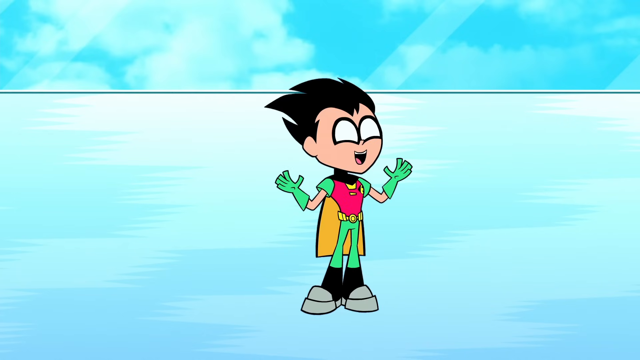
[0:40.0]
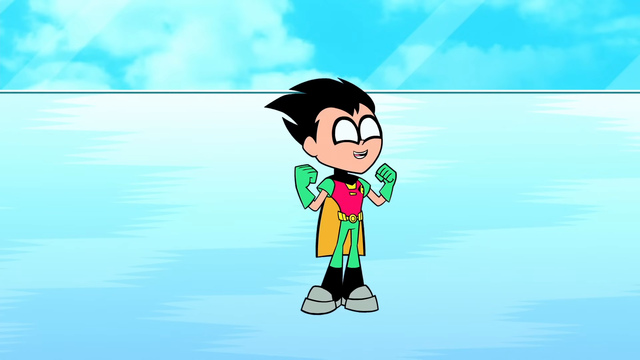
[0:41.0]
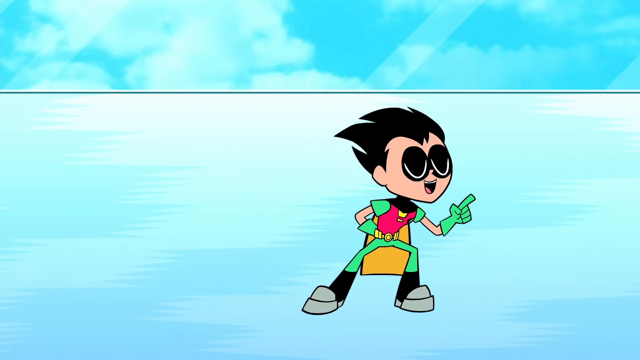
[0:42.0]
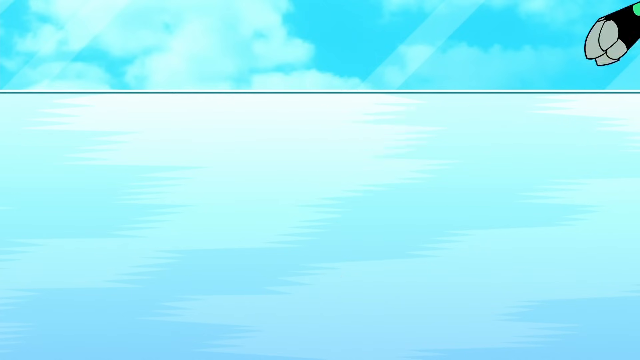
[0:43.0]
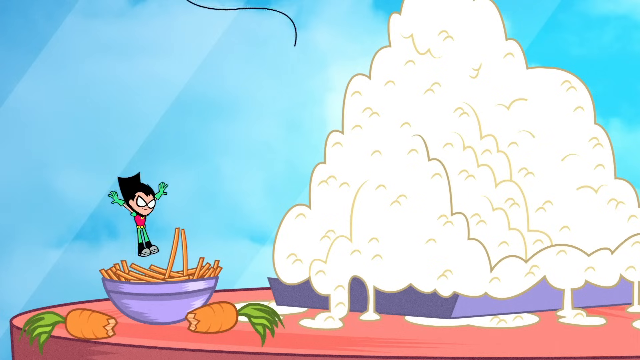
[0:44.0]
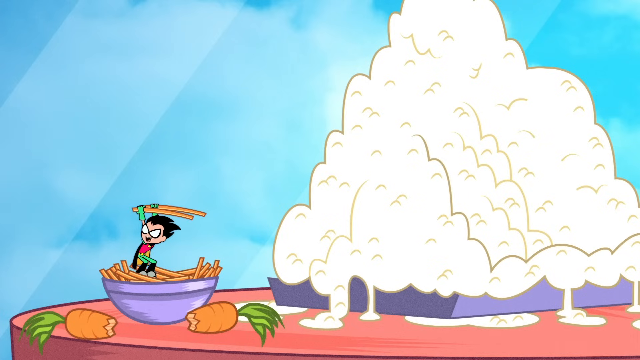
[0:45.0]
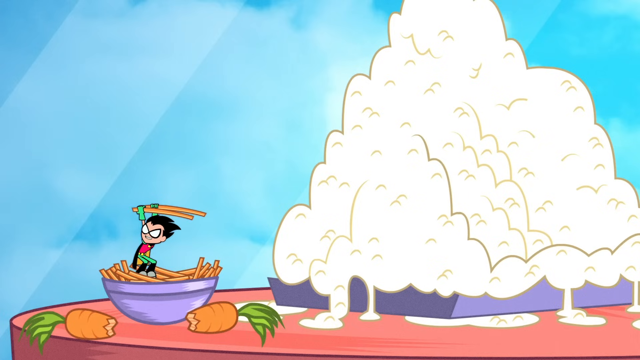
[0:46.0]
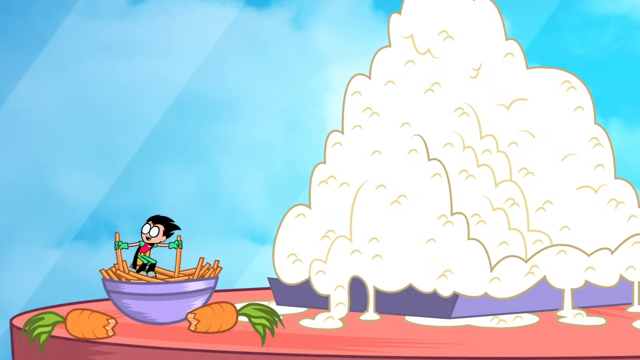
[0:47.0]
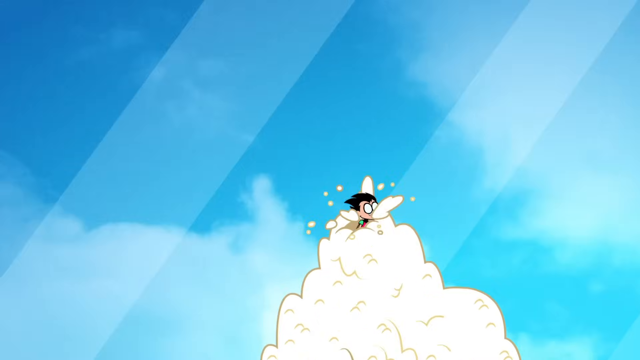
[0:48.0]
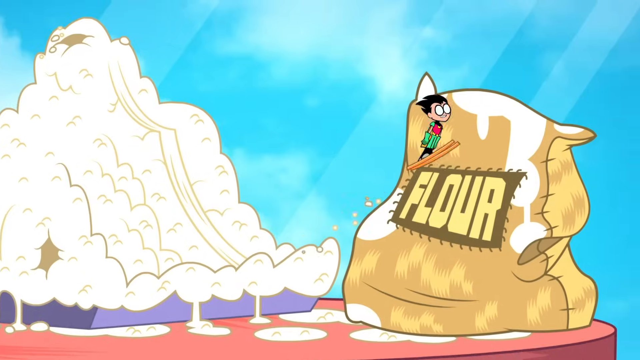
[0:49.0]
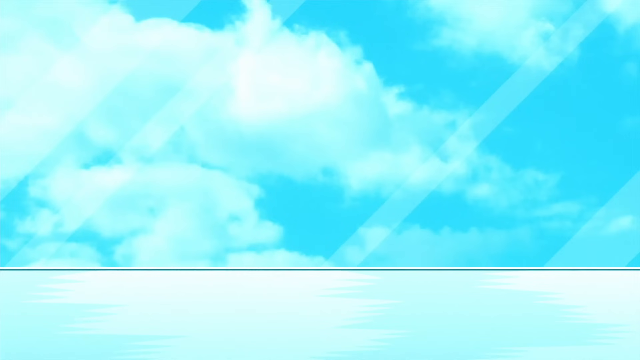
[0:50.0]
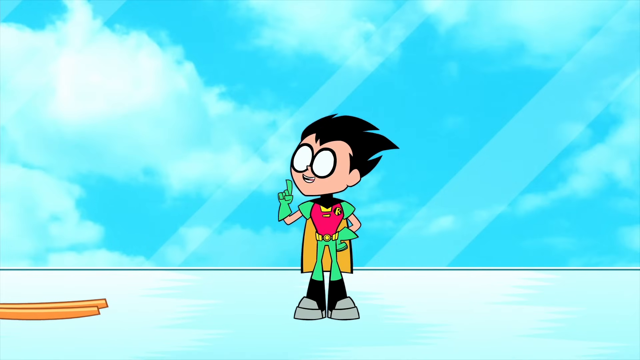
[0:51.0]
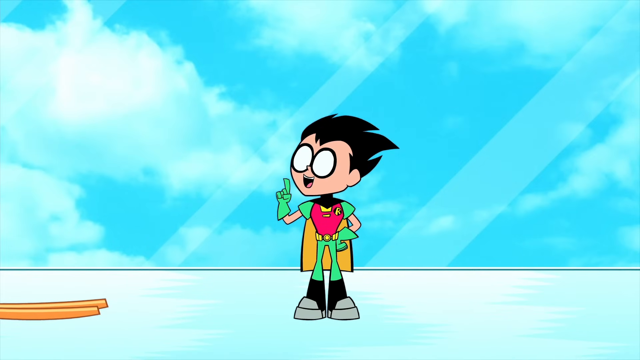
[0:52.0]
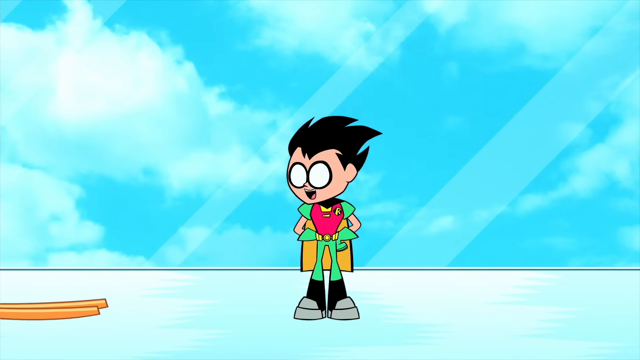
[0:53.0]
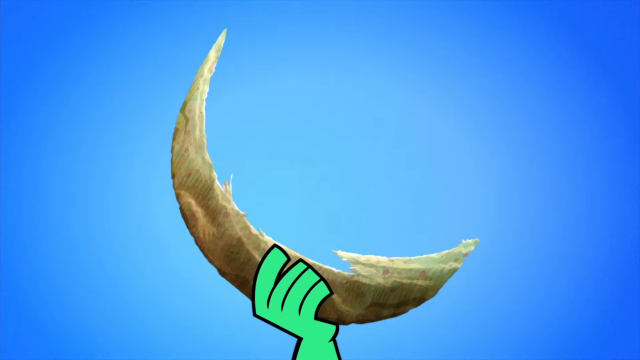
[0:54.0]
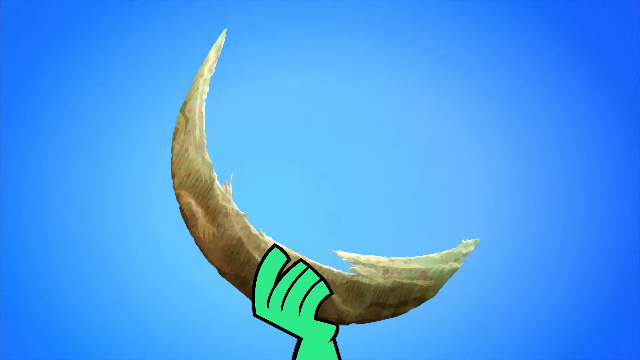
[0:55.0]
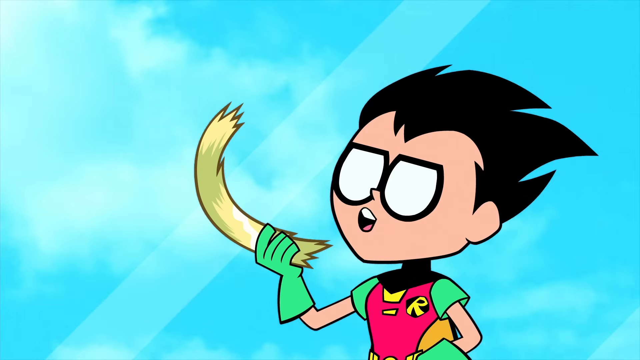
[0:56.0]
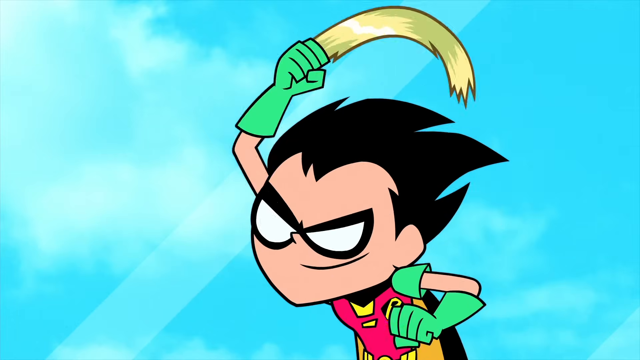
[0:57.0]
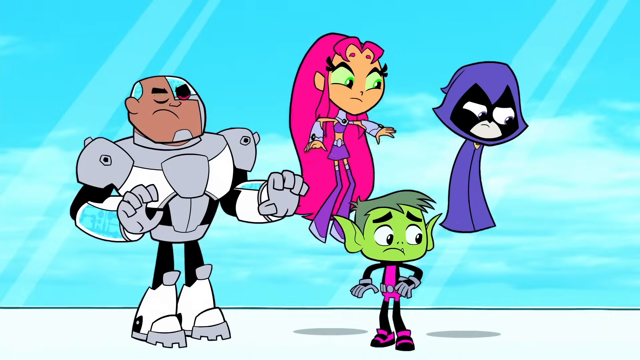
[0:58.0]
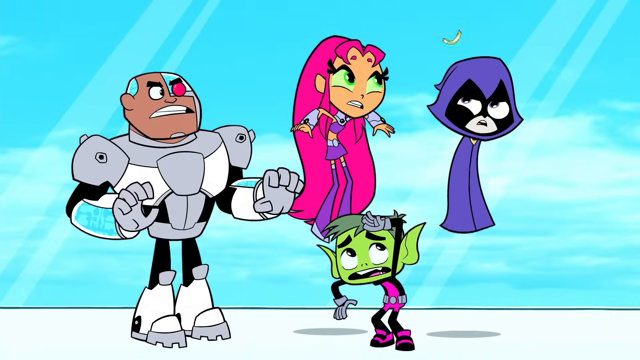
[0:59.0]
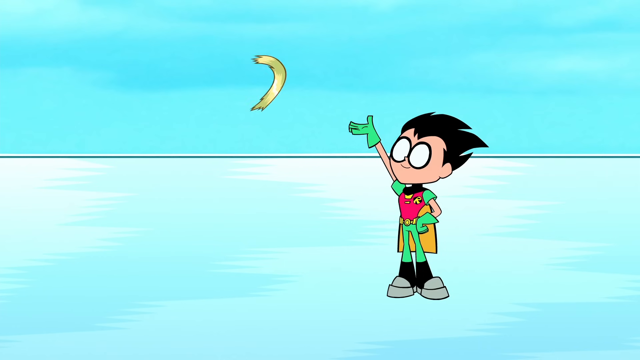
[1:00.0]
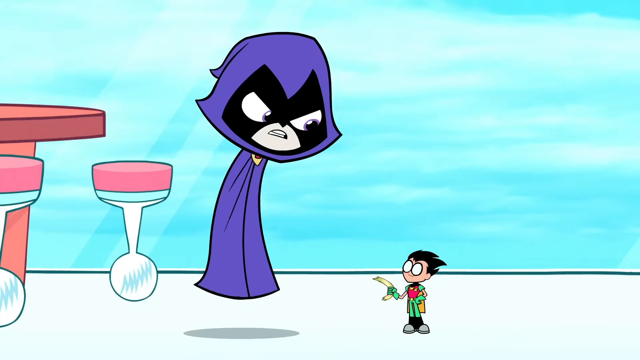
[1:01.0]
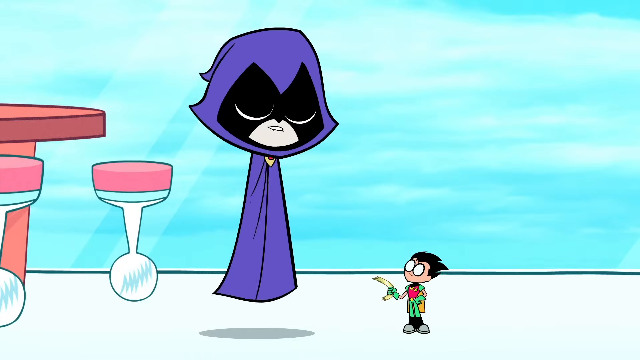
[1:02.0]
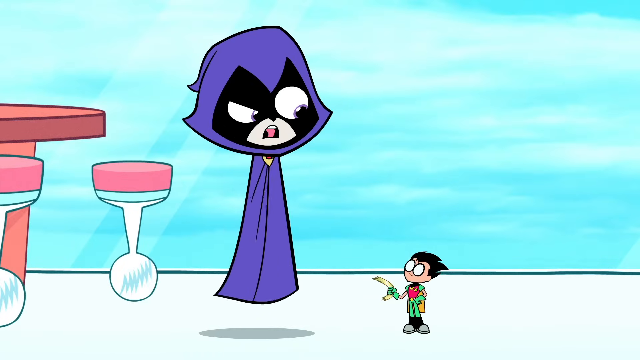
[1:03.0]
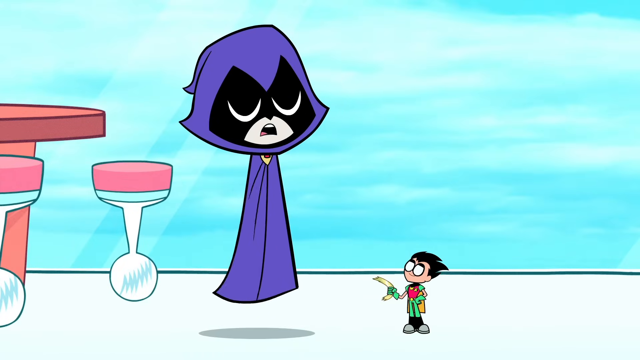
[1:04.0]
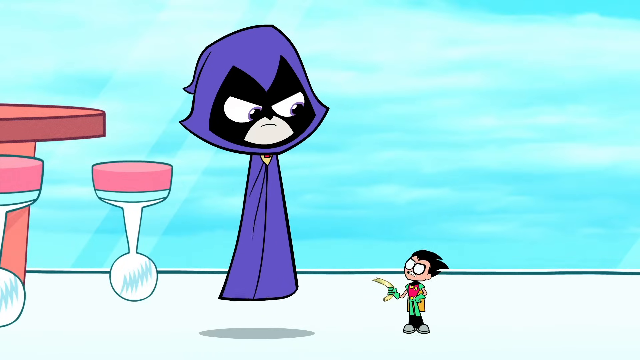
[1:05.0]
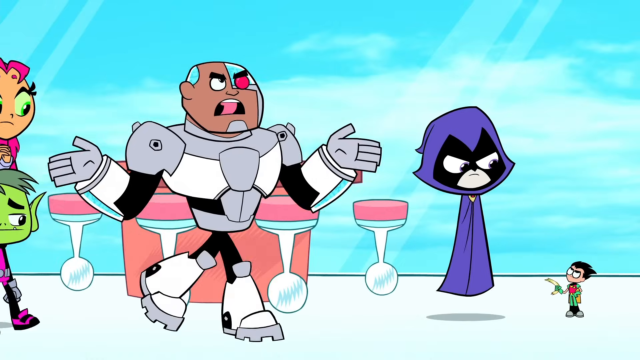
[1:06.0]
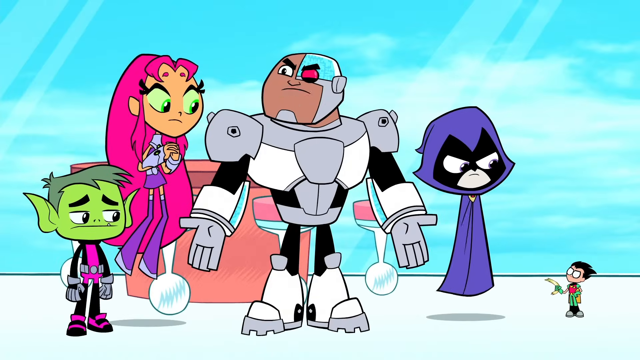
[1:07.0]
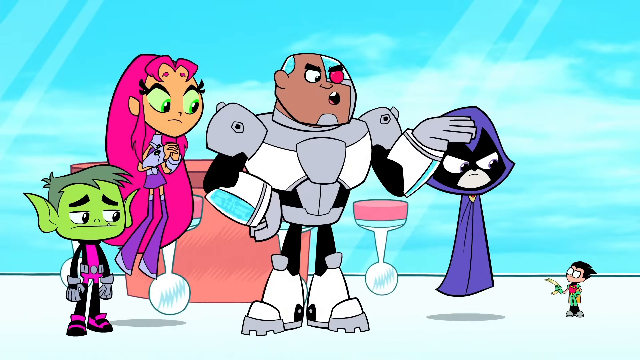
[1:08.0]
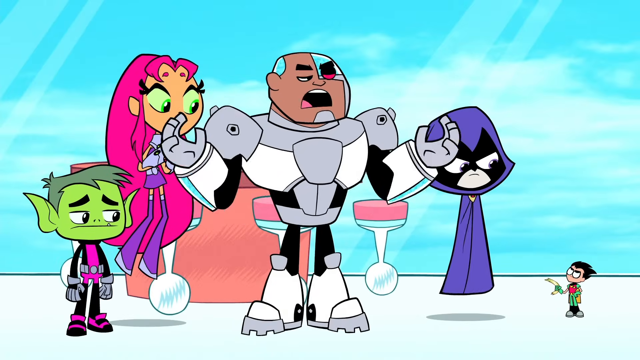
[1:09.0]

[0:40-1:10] The view focuses close on Robin against a blue background, in his green and red costume with his yellow cape. He speaks very animatedly with his arms up, then shoots his grappling gun again and propels himself to a table. The table seems to be filled with a bowl of snacks and a tray of what looks to be maybe mashed potatoes or some sort of pile of white food. He uses the pile like a mountain to ski down, jumps over a bag of flour, and lands. He then pulls out what looks to be maybe a cut toenail and throws it at the rest of the Teen Titans like a boomerang. Raven comes over to him and appears to maybe be scolding him; she does not look pleased. The rest of the Teen Titans then walk up and also talk to Robin.